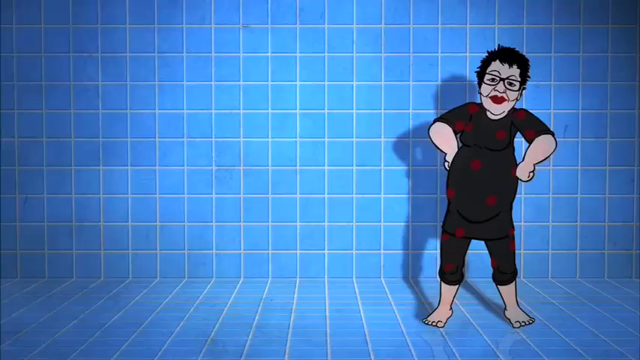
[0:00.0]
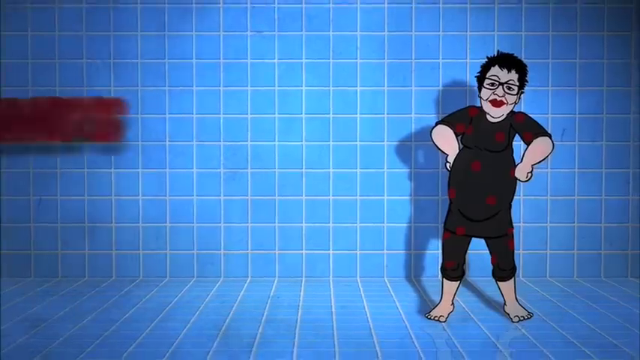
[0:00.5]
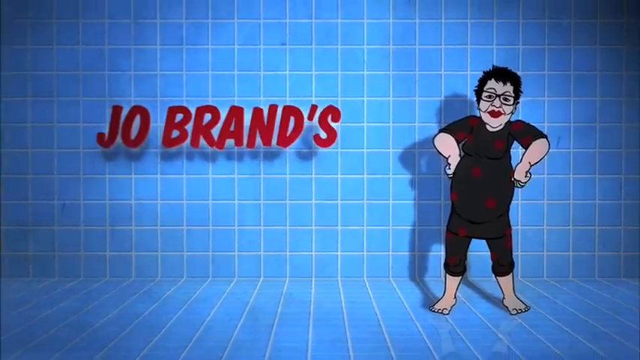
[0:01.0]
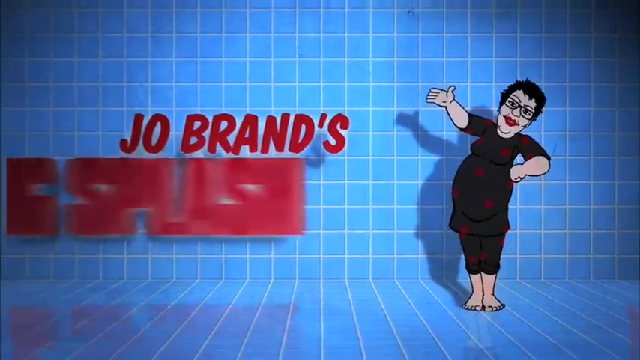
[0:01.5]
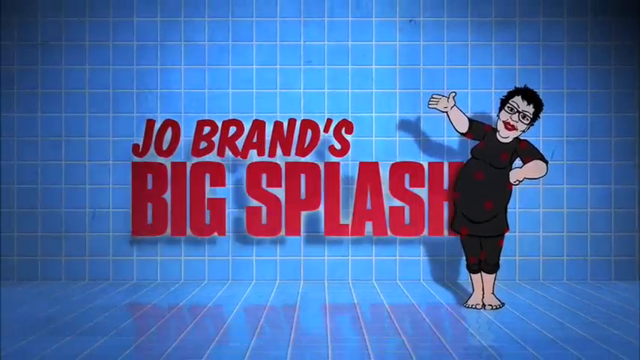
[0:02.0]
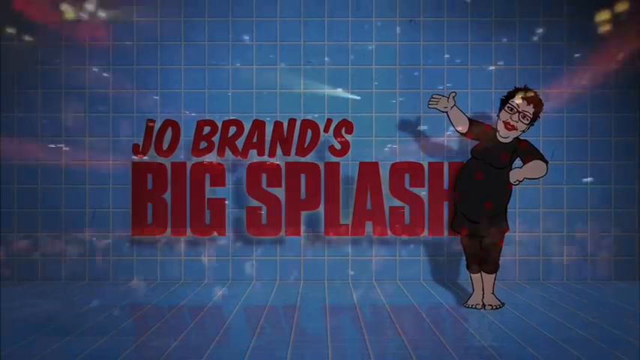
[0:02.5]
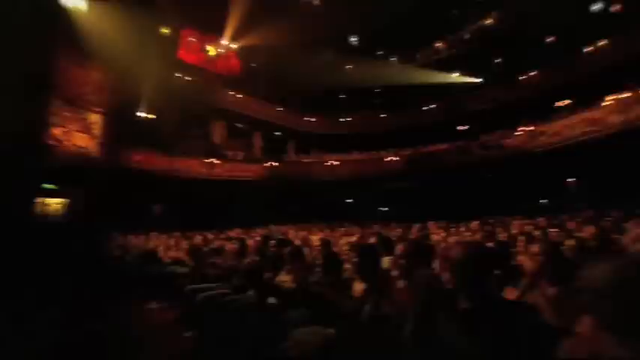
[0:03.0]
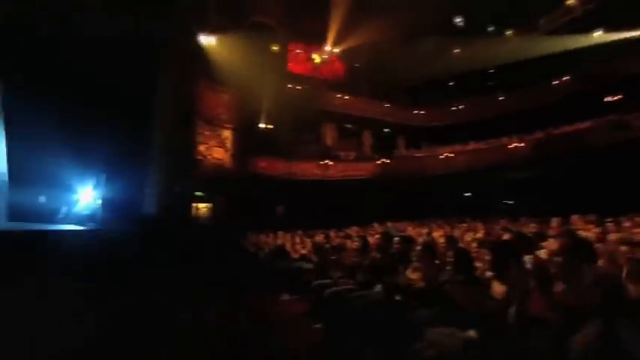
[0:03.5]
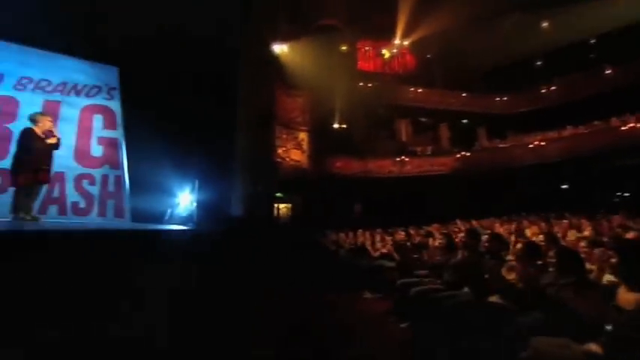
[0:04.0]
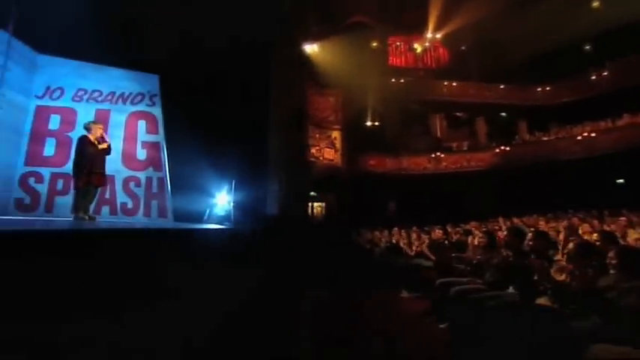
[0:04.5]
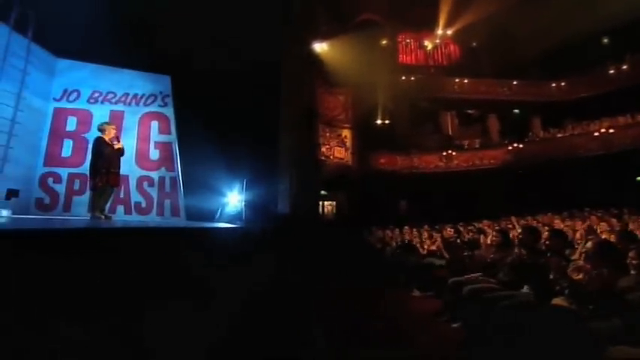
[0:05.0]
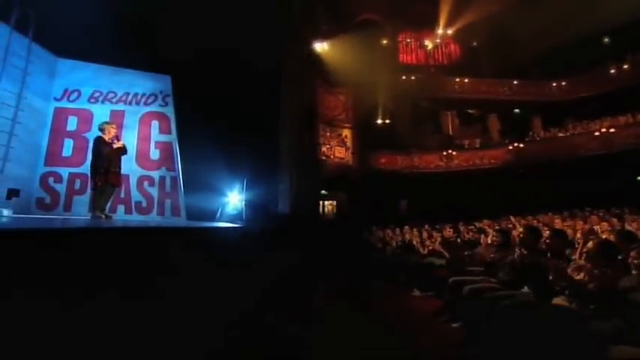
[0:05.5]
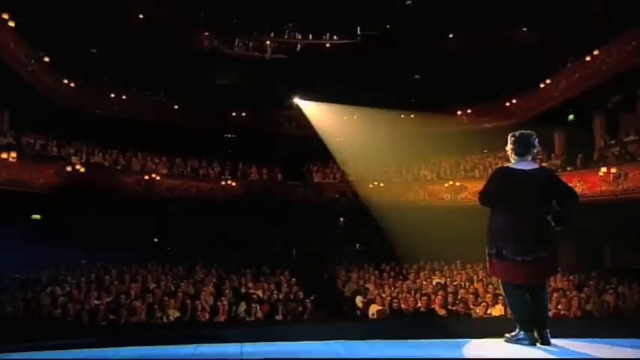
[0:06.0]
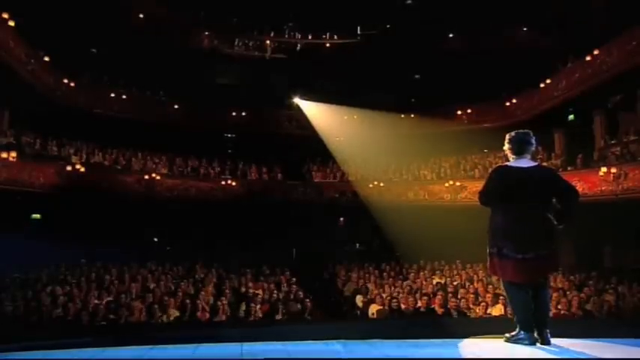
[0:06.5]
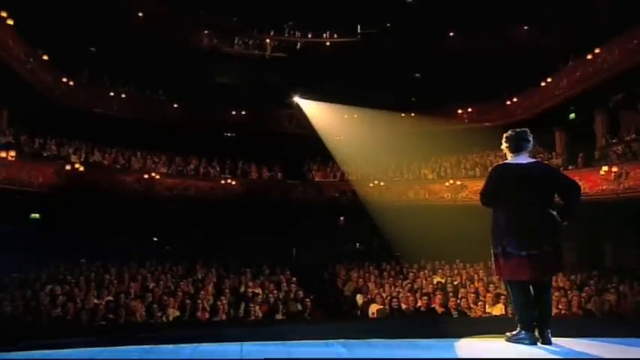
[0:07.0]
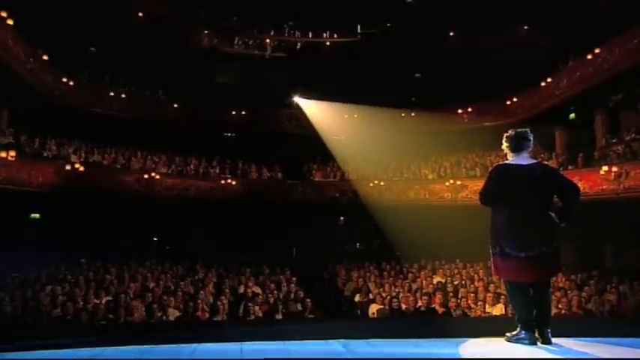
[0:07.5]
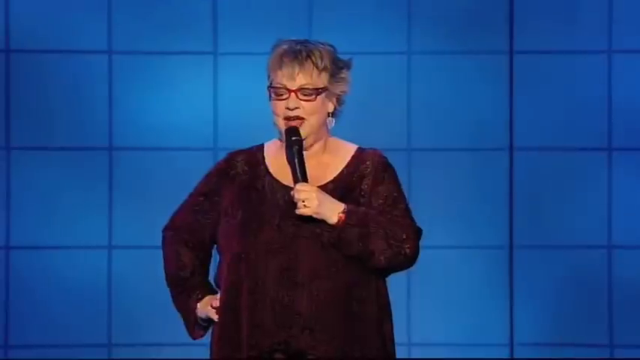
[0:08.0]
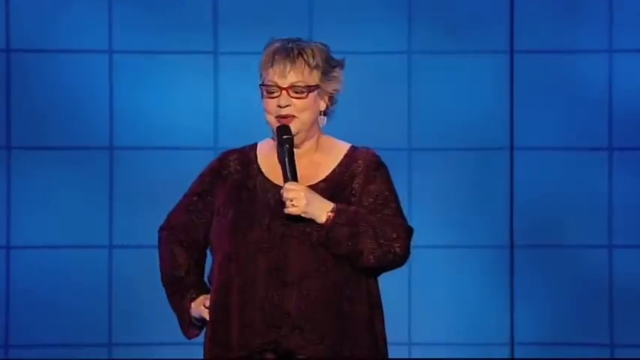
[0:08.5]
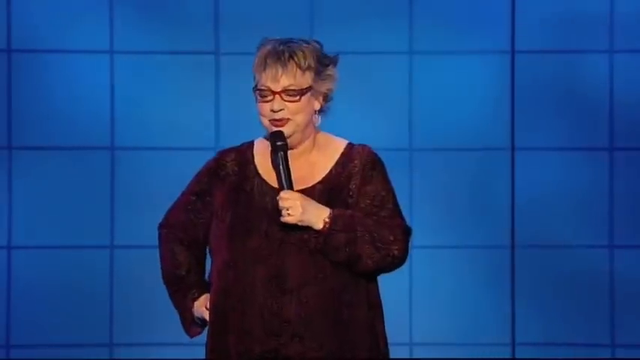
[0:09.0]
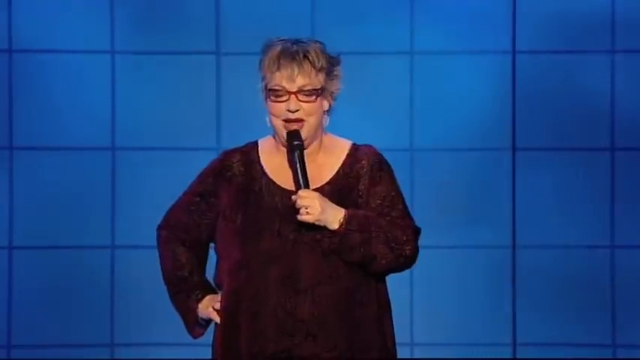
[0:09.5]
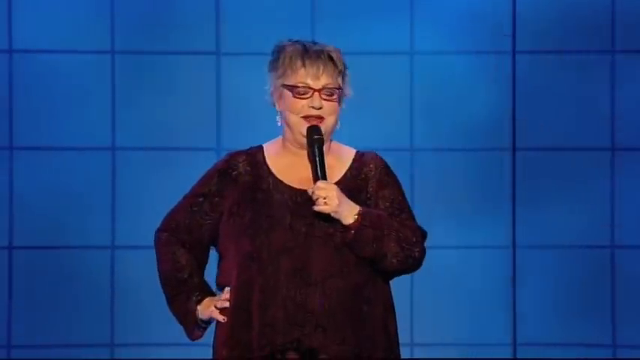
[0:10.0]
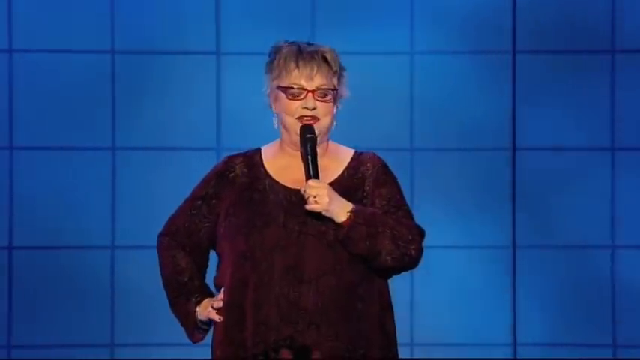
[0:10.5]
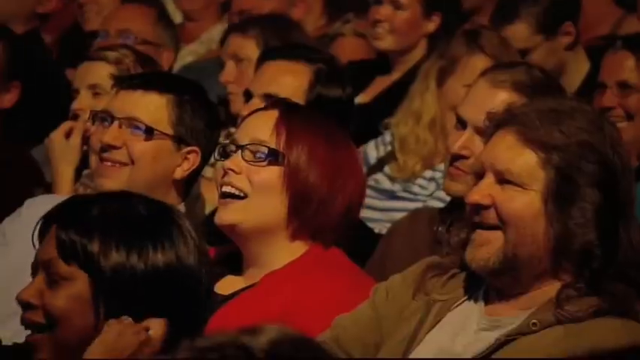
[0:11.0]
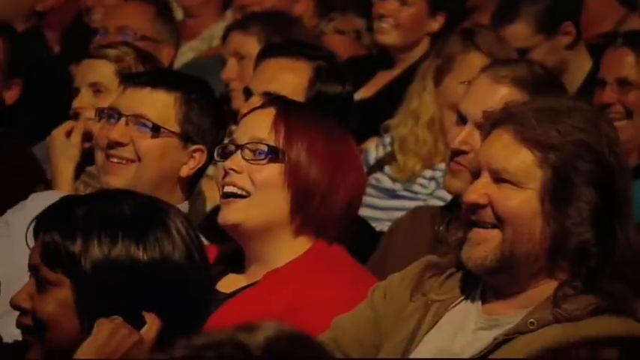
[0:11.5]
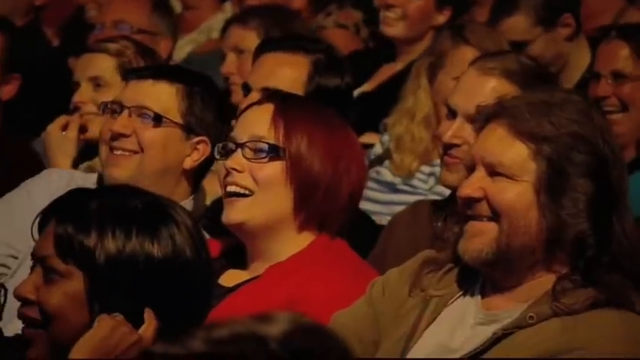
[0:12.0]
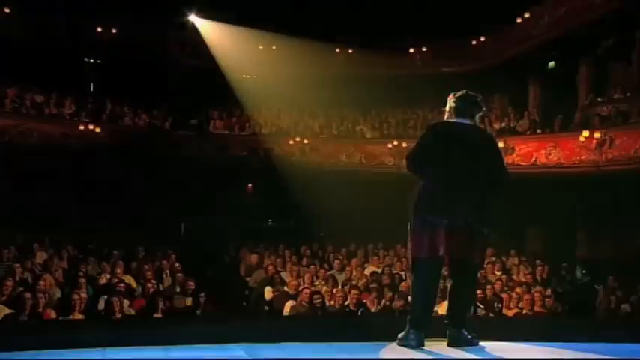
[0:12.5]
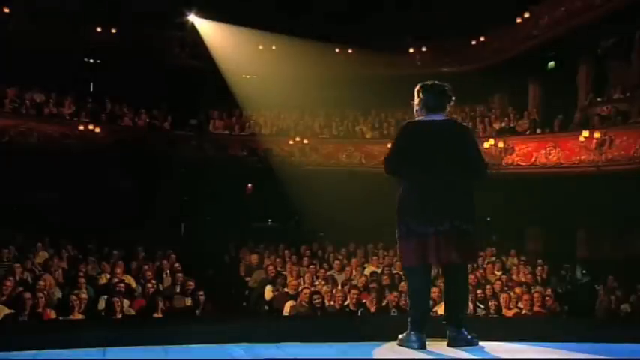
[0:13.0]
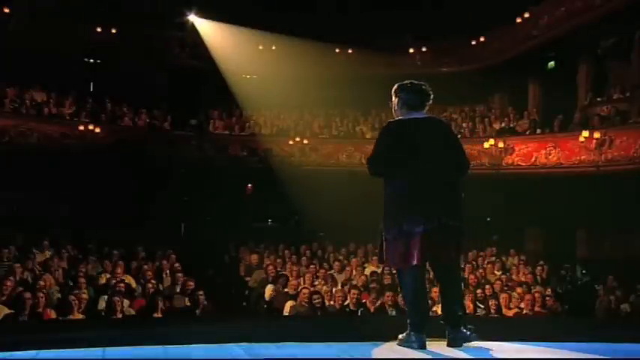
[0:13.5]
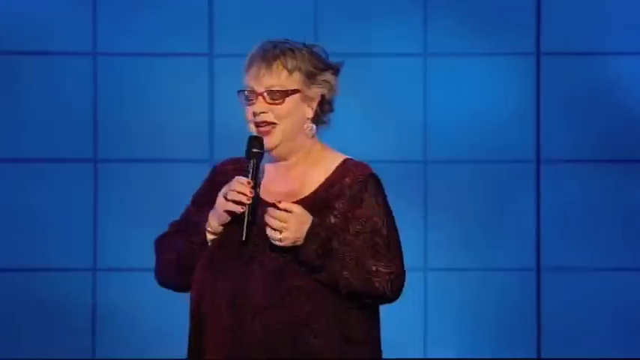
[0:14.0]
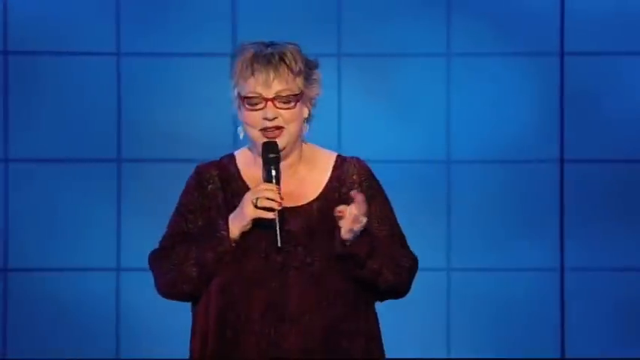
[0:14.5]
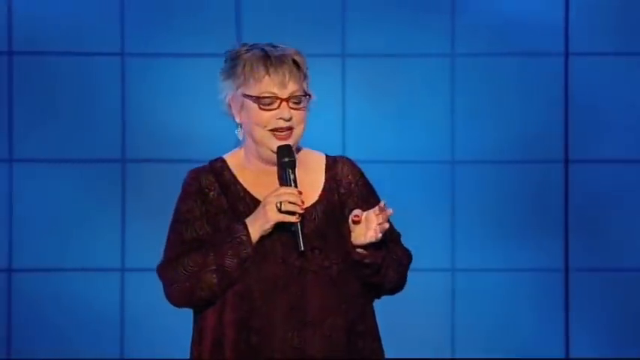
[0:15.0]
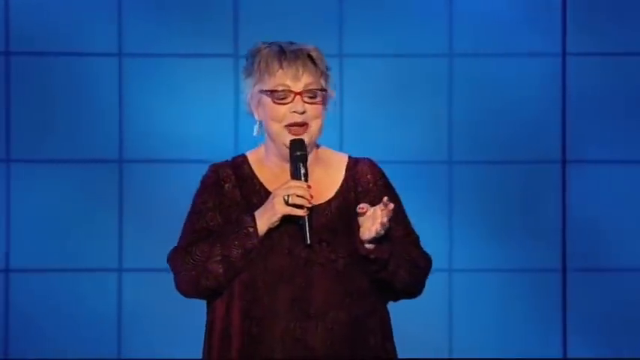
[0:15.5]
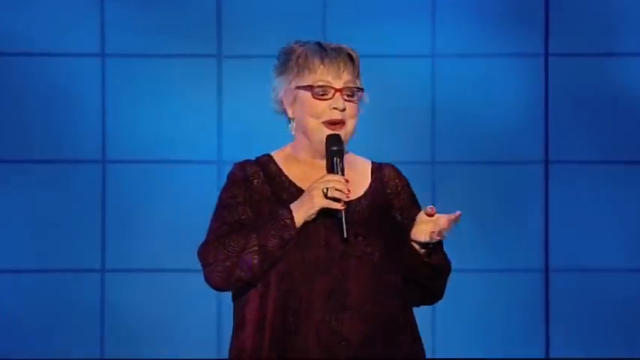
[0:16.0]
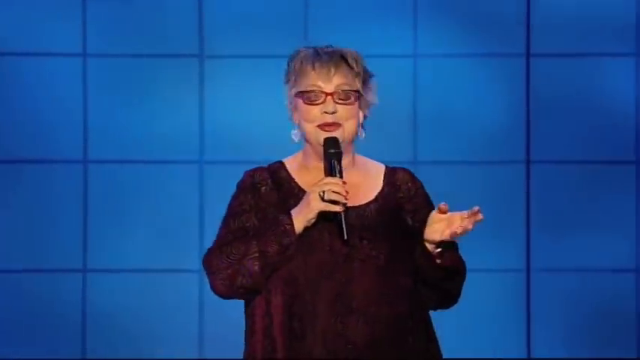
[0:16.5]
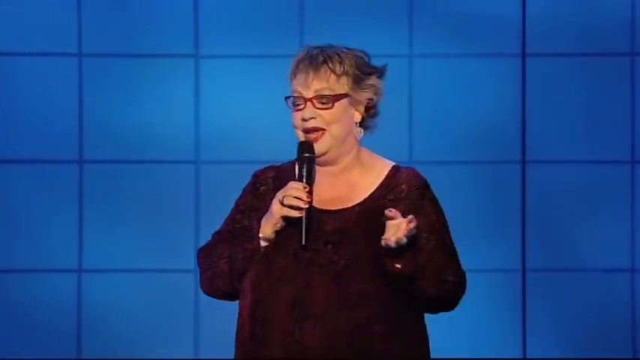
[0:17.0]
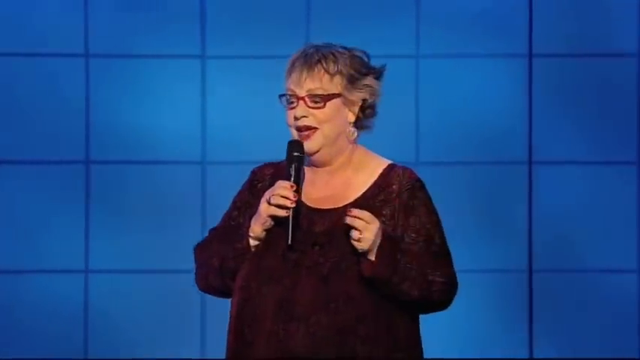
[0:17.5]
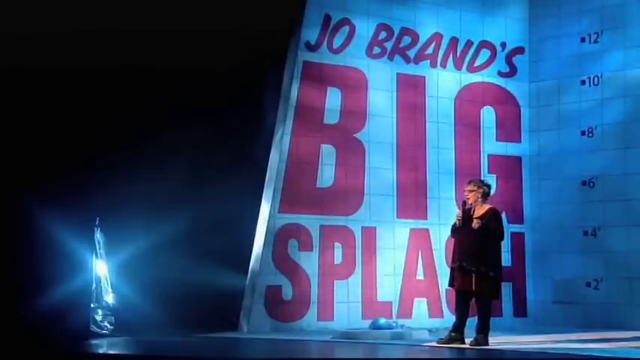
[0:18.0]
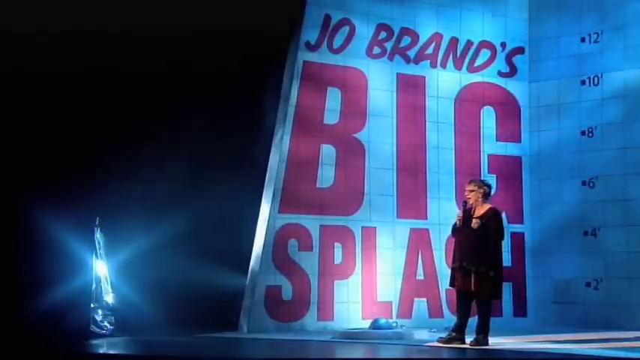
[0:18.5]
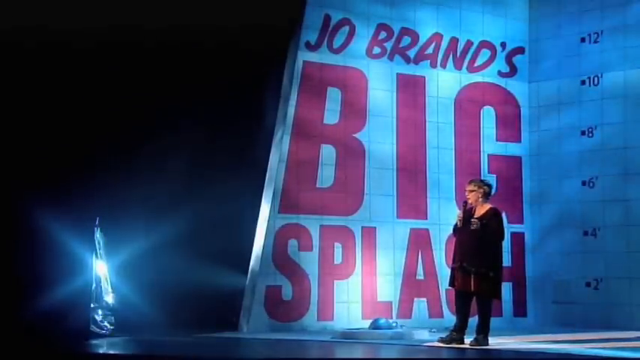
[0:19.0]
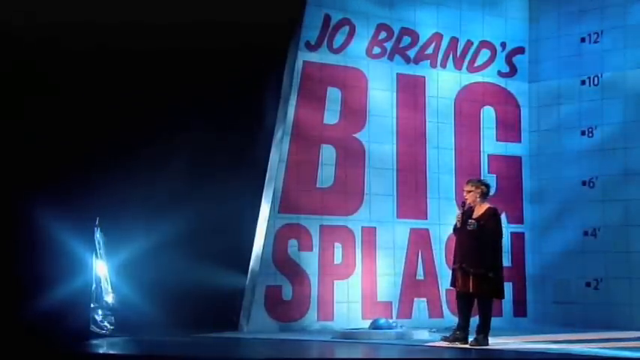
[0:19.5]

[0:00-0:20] The background is covered in blue cubes separated by white lines. A cartoon of a pale female character appears, with short spiky black hair, glasses with a thick black frame and red lipstick. She wears what looks like a black dress with black leggings that have red dots or stars on them, and she is barefoot. "Jo's Brands Big Splash" is written in big, bold red letters. A real woman, not a cartoon, is also shown. She wears a purple dress, glasses with a thick red frame, hoop earrings, a ring and red lipstick, and she has gray hair. She is on stage holding a black mic and talking to a large audience, who are laughing.